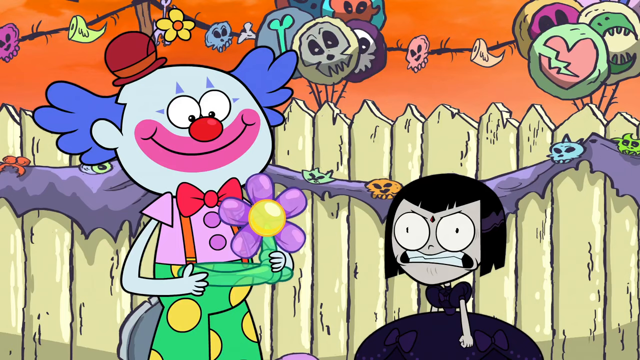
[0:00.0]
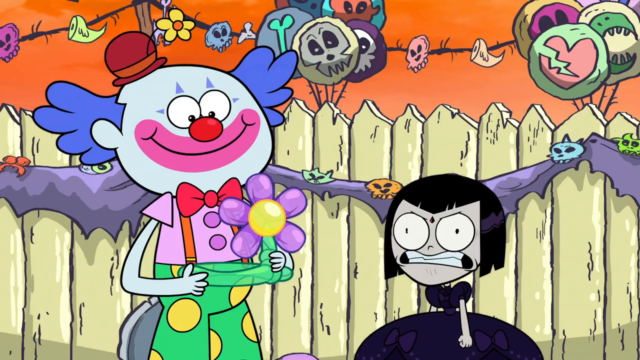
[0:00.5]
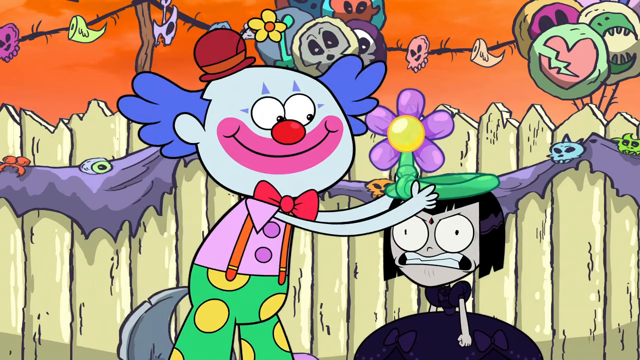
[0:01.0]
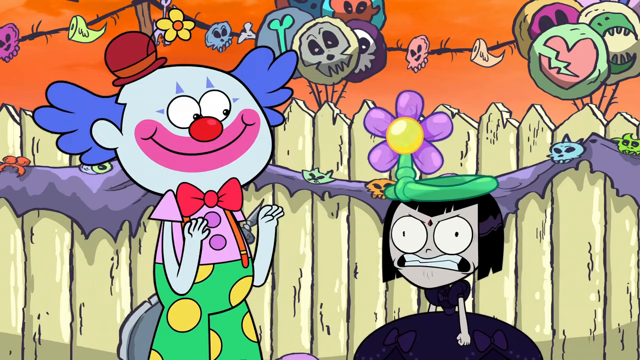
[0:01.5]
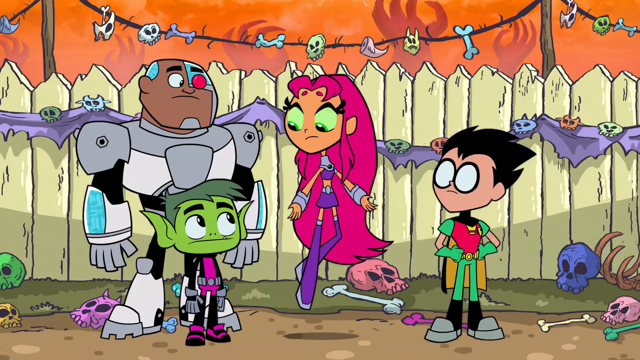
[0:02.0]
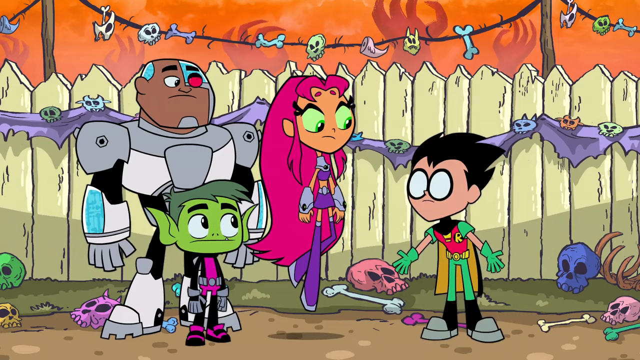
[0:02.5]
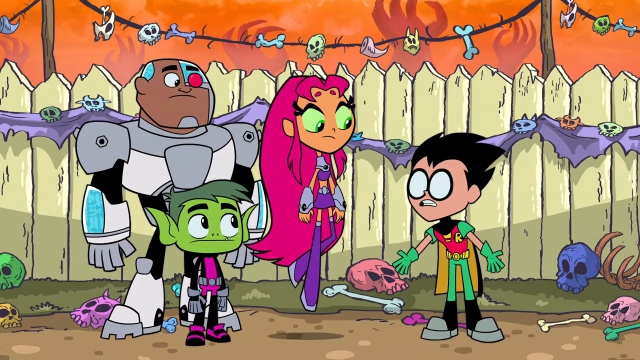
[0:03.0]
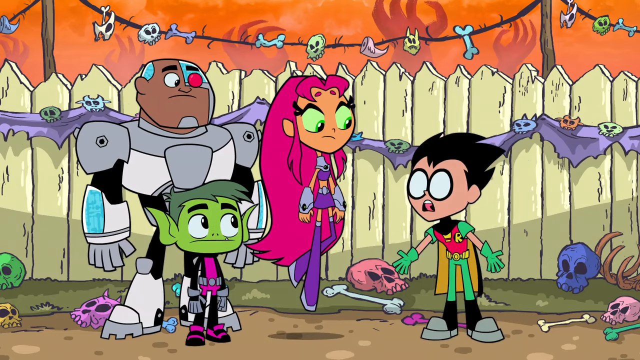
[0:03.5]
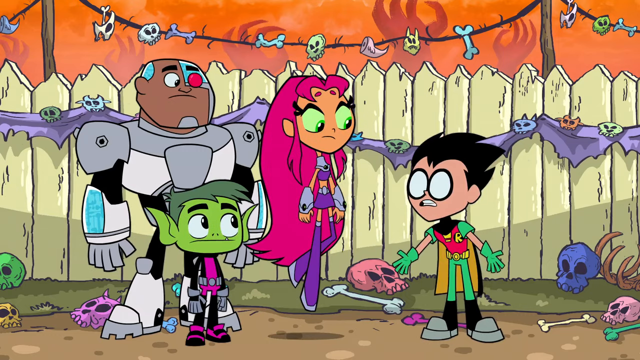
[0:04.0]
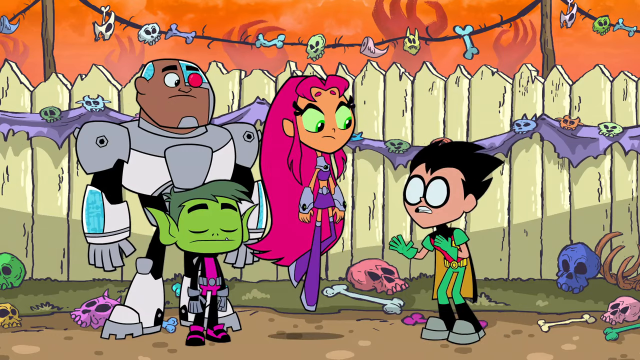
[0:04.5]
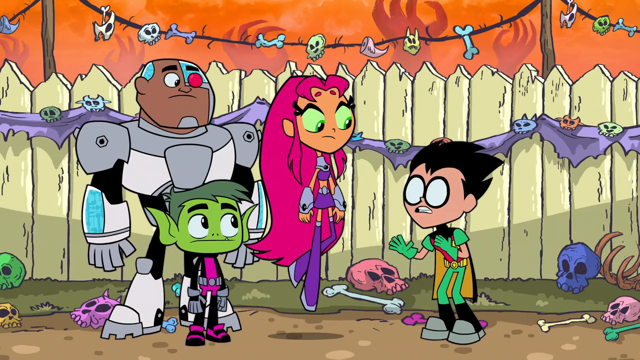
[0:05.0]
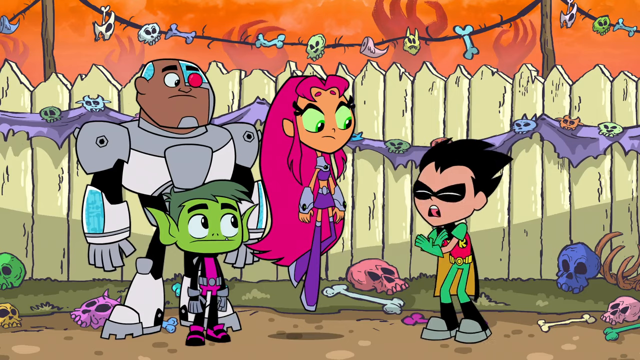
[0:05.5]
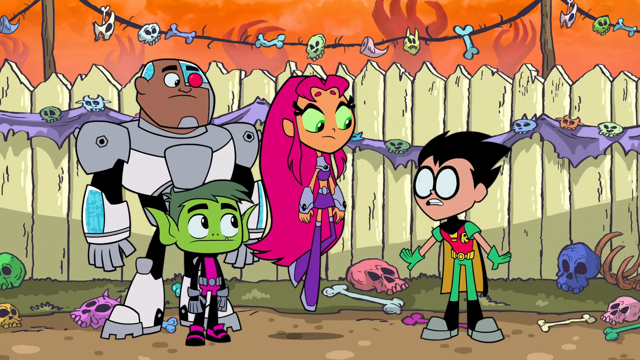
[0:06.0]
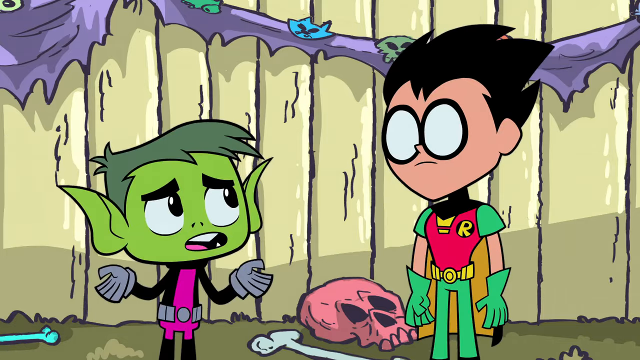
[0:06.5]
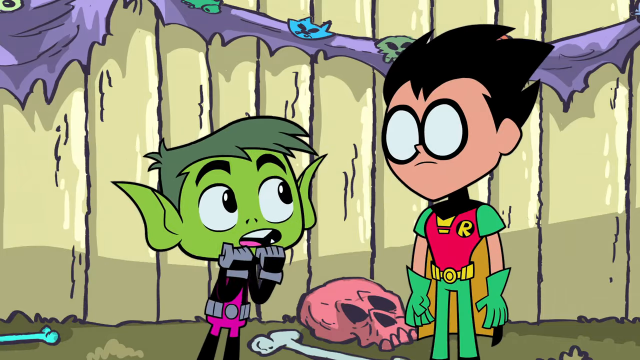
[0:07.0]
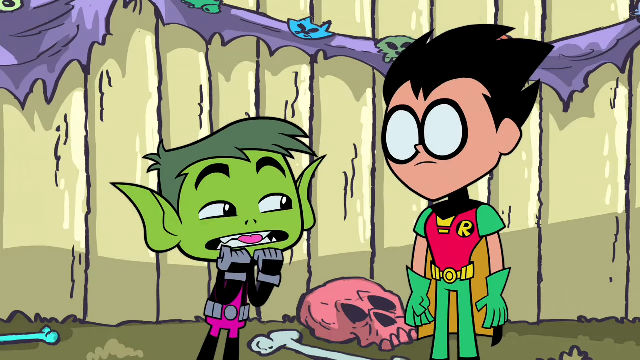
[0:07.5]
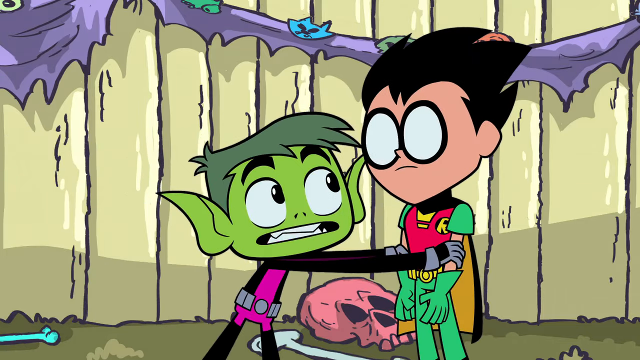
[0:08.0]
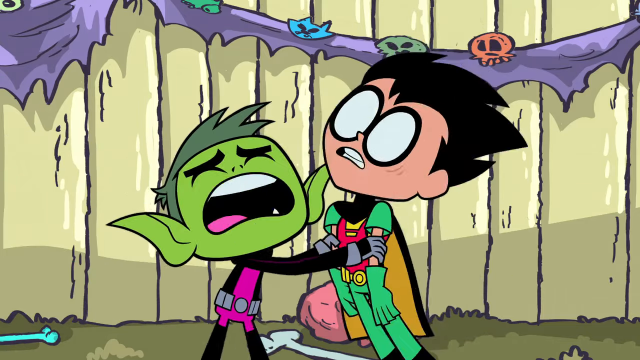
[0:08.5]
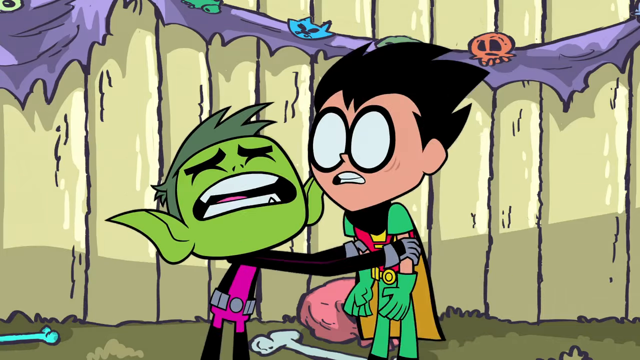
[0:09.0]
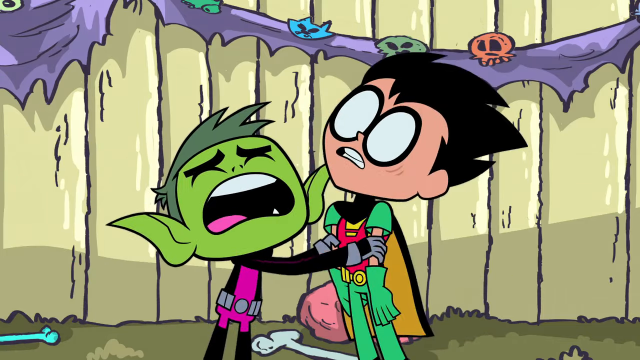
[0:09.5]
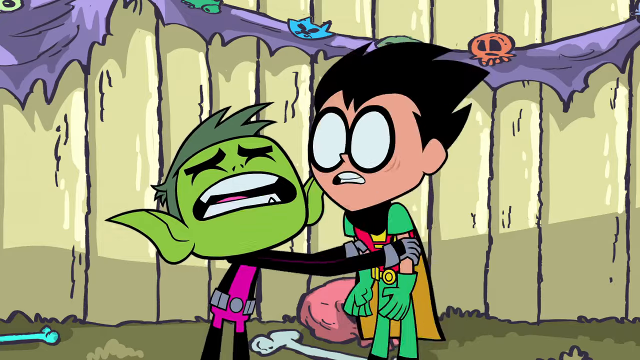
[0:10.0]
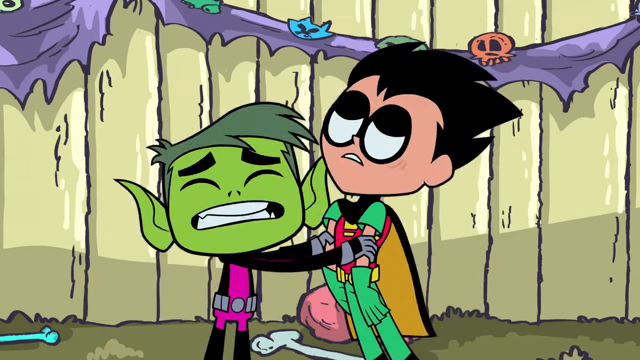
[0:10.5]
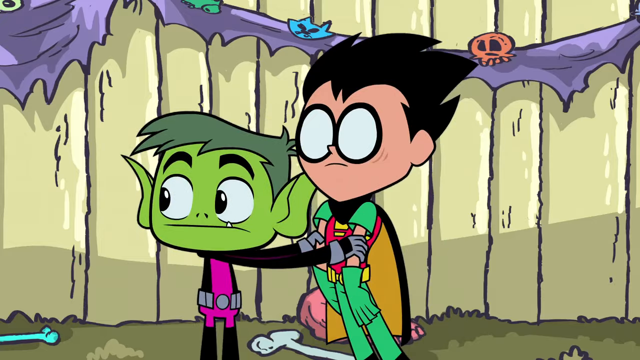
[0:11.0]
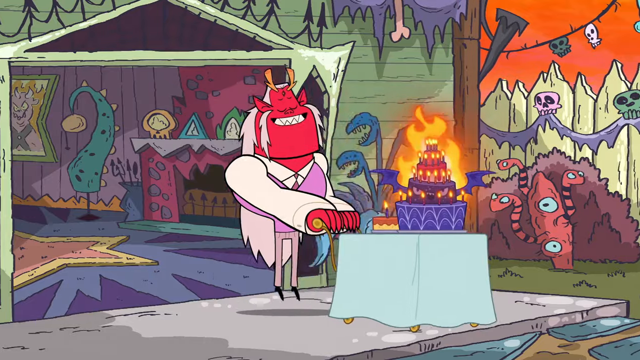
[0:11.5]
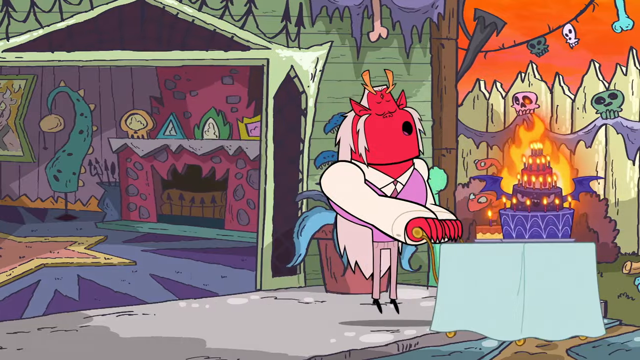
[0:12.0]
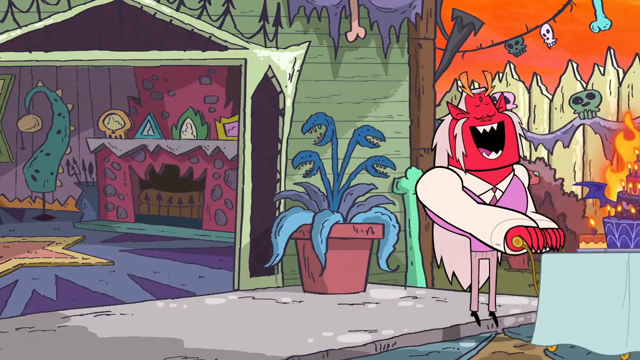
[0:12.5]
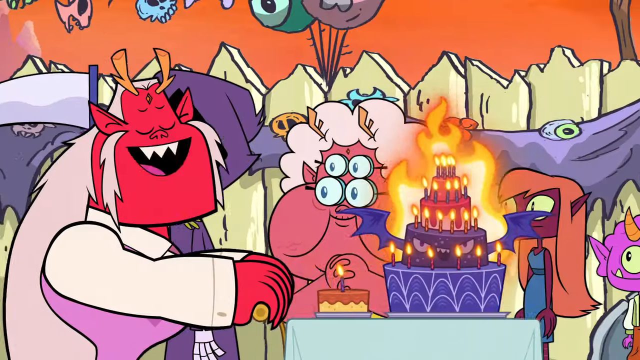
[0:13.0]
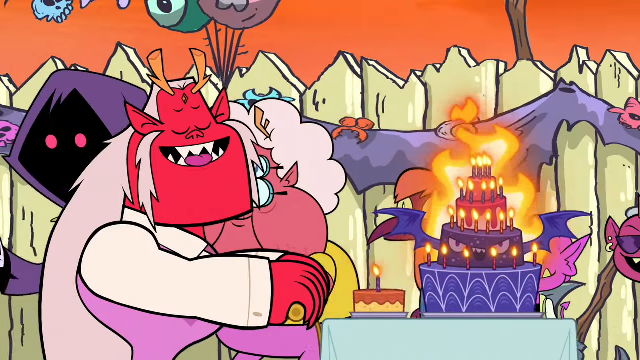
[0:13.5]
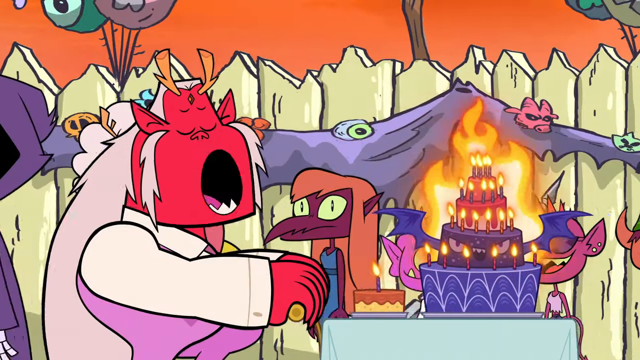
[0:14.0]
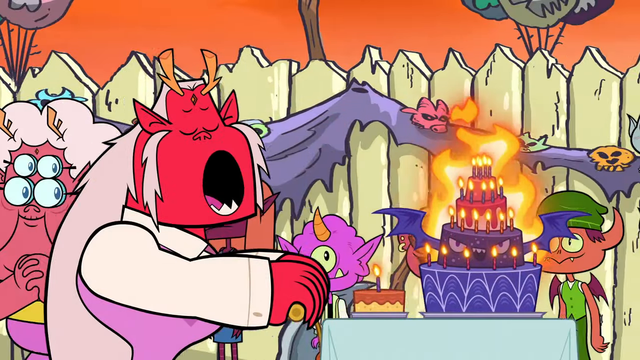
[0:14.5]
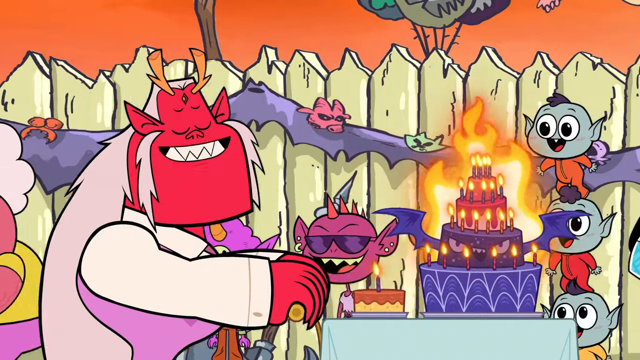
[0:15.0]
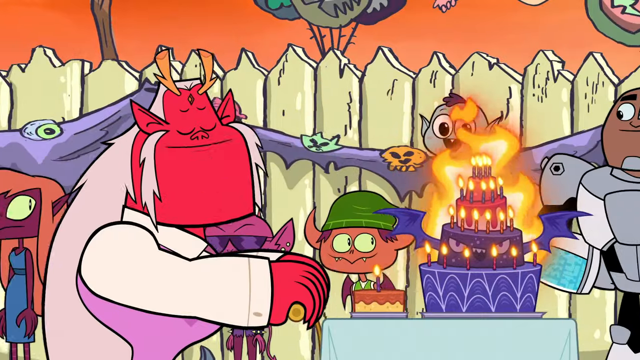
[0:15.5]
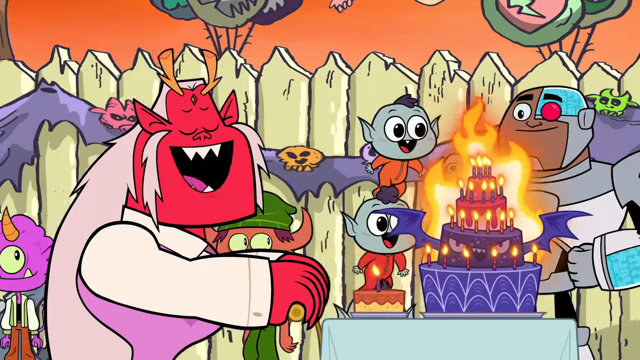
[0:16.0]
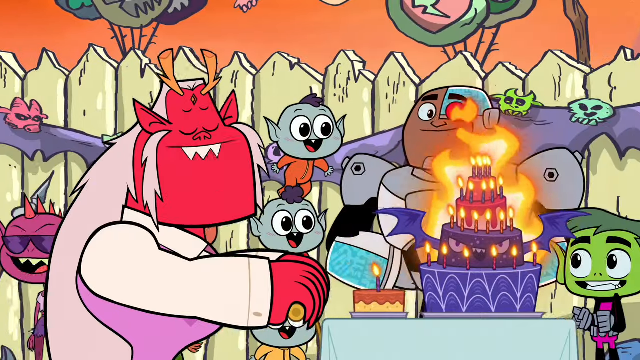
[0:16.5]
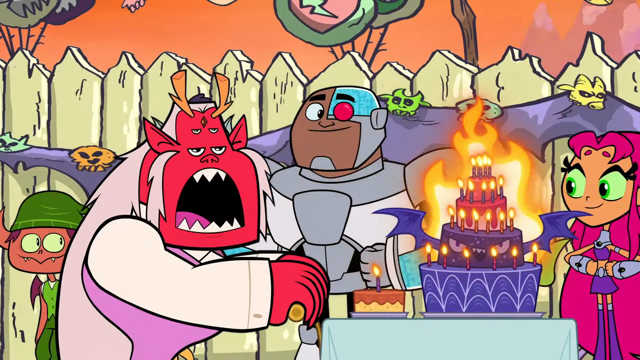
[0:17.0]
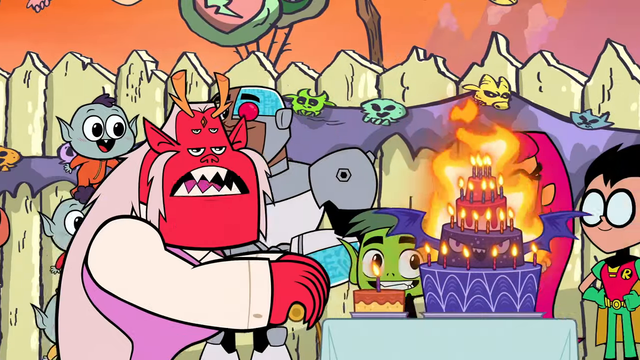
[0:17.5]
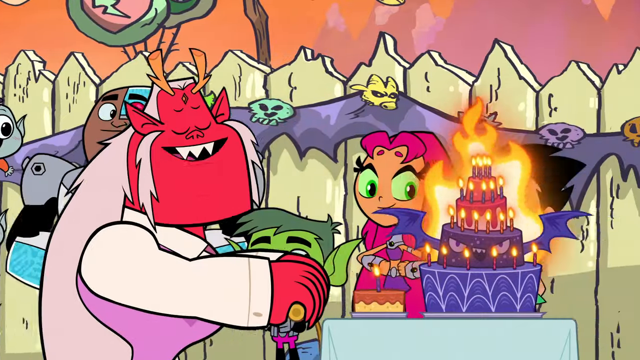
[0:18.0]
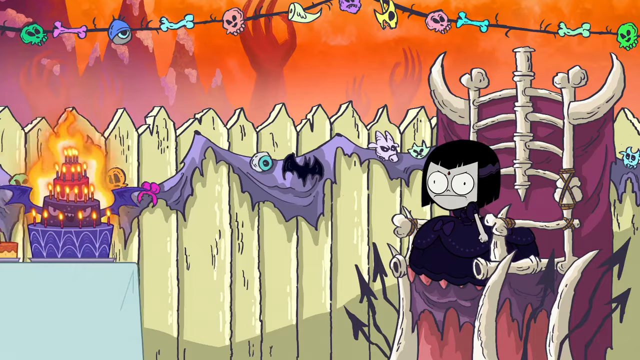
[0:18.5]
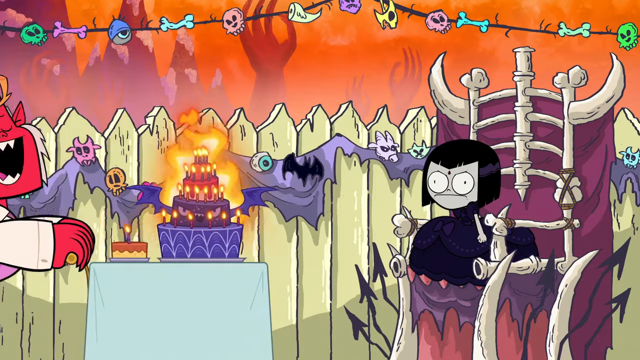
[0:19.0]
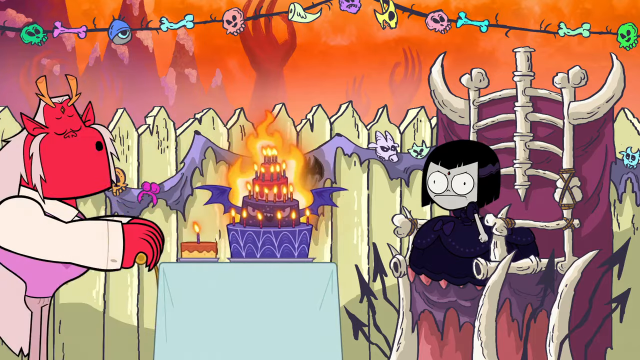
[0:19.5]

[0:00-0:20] The animation is bright and over-exaggerated, almost rudimentary, and not very detailed. At first the characters appear to be outside celebrating someone's birthday party. The person being celebrated looks like a goth: black hair, dressed all in black, with a kind of grayish face, and they look unhappy about the brightly colored celebration. A very bright, over-exaggerated flower clown makes a flower balloon and gives it to the birthday person, who is still not happy. Balloons in the background are all goth-like. Then there are people at the party who could be superheroes: one looks like a kid Robin, a girl in purple with fancy cuffs and purple hair seems to be hovering, there is a green goblin guy, and another looks kind of like a cyborg. They all look like very young kids, and they are having a conversation. The green goblin shakes the kid who looks like Robin, and they seem to be having some kind of argument. They look back, and a devil-like person in a suit comes out of the house pushing a little tree that holds a cake with candles, all in flames. He looks like he is singing or saying something, possibly wishing happy birthday. Everyone in the background is happy, while the goth-looking girl, sitting on a bone throne, looks really upset and mad about the cake.